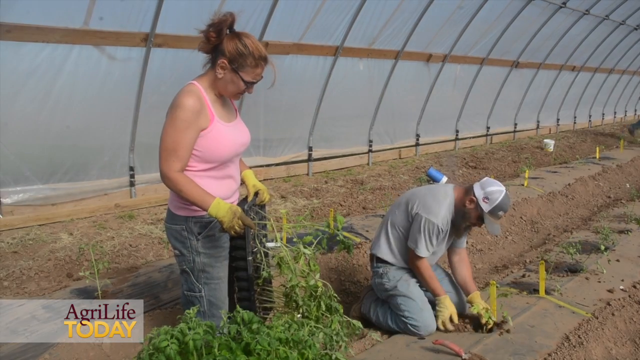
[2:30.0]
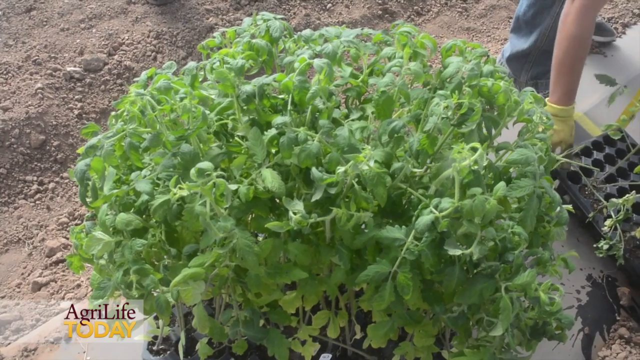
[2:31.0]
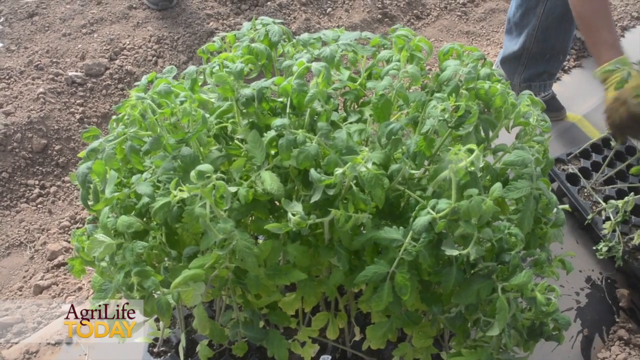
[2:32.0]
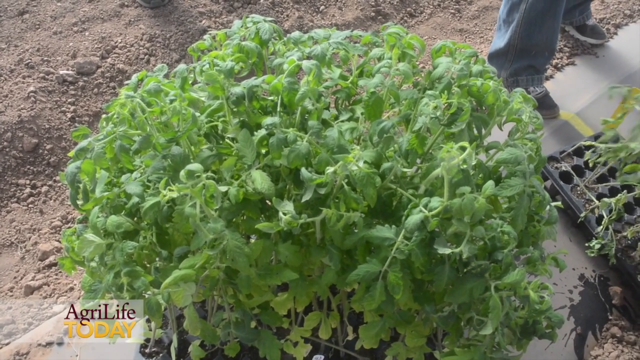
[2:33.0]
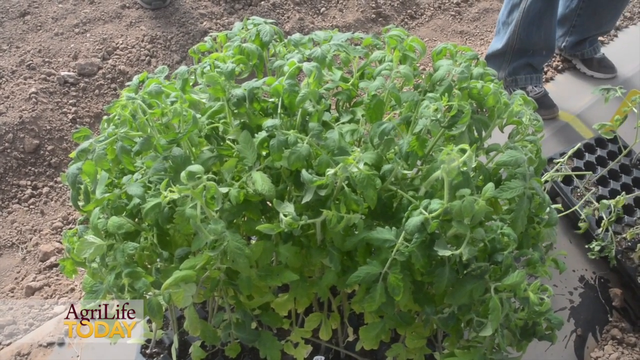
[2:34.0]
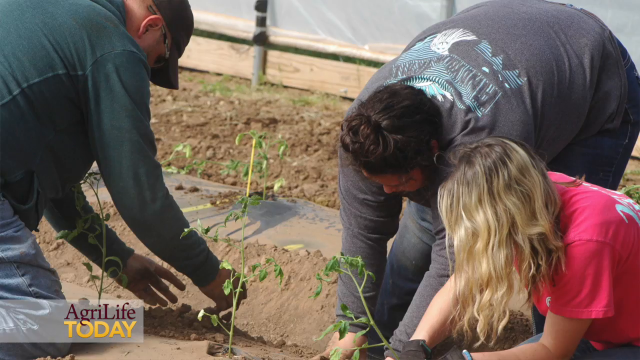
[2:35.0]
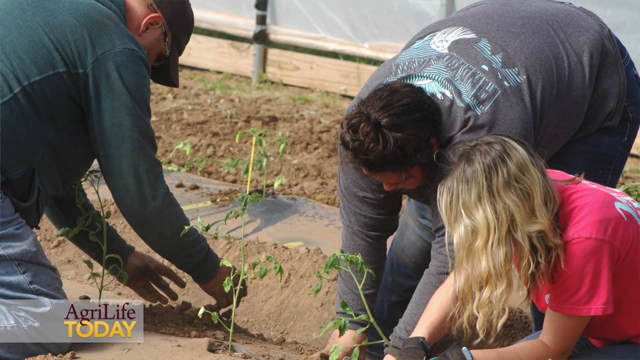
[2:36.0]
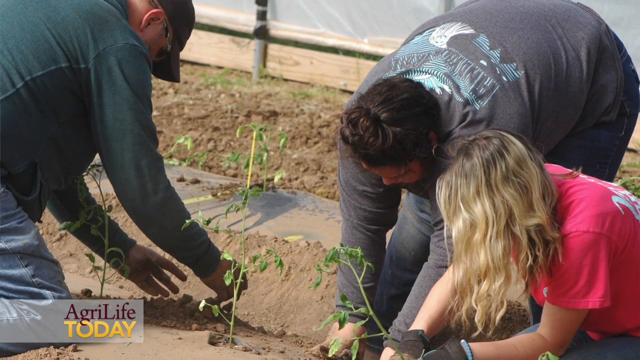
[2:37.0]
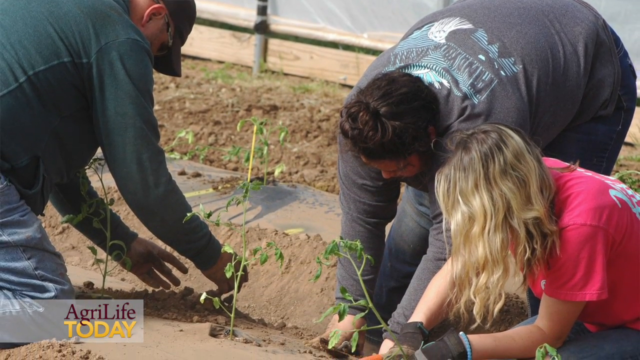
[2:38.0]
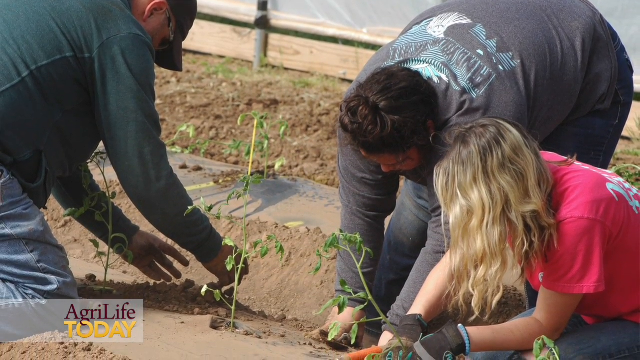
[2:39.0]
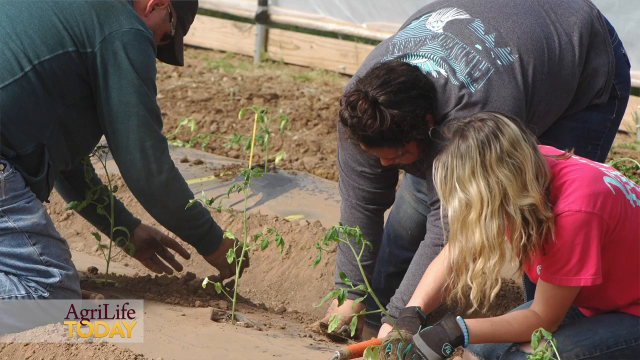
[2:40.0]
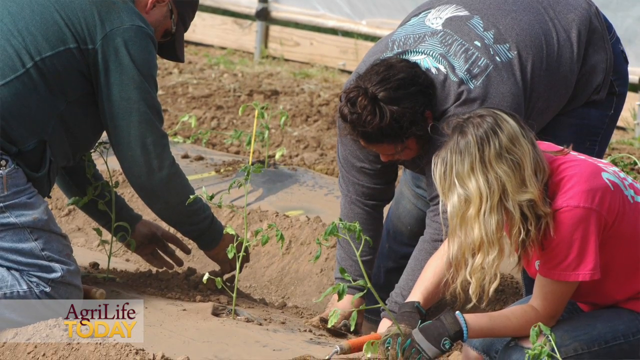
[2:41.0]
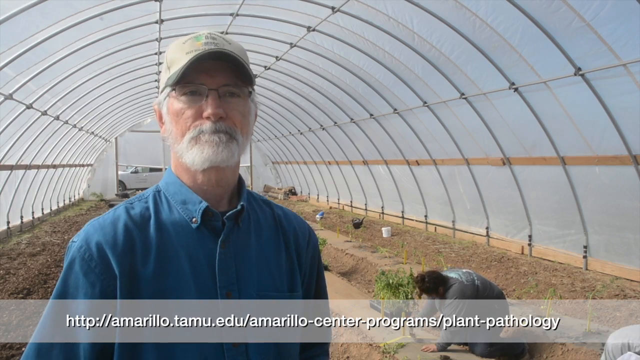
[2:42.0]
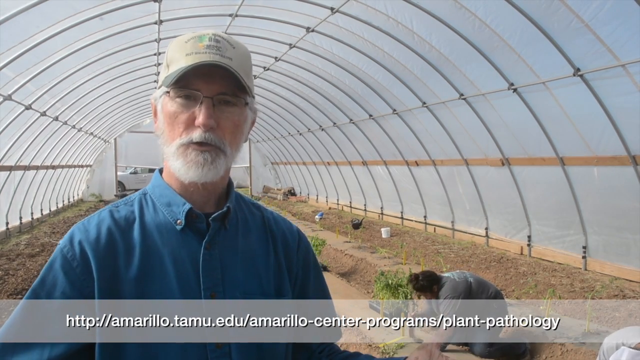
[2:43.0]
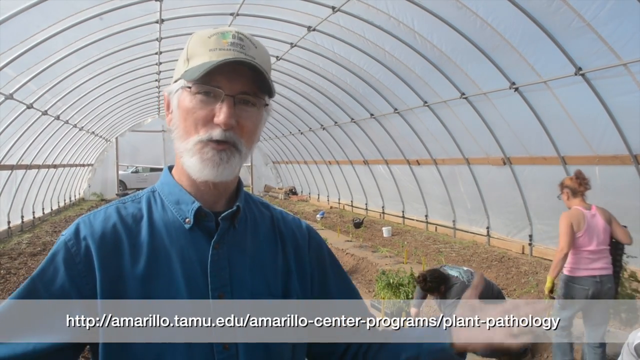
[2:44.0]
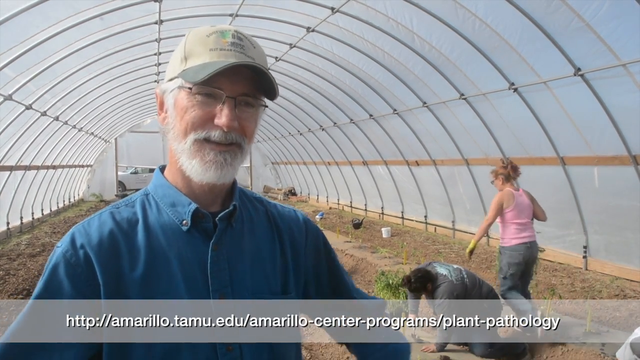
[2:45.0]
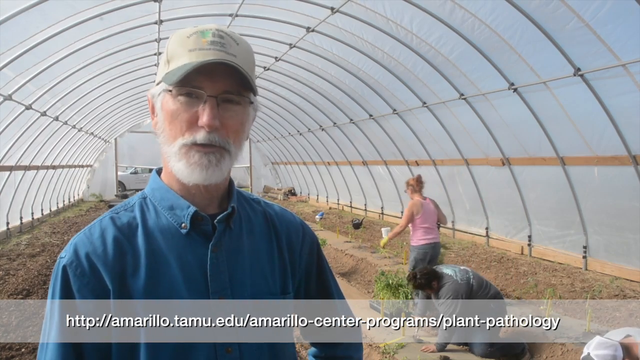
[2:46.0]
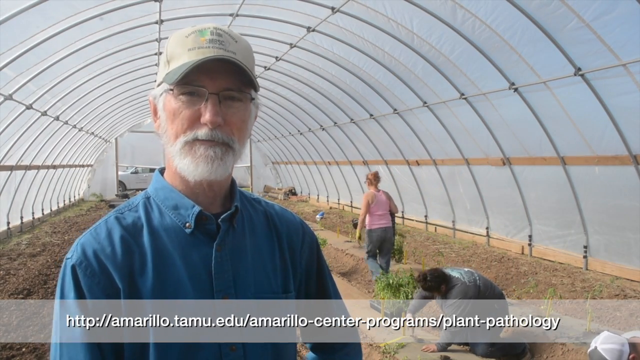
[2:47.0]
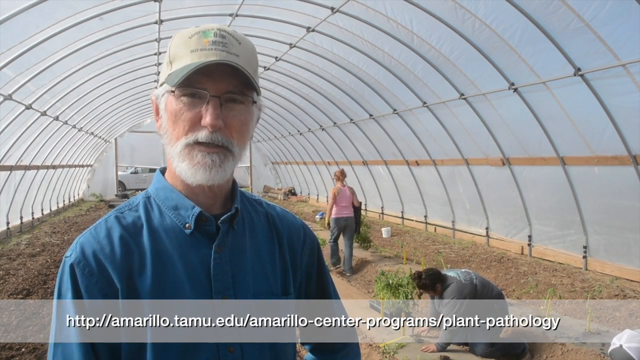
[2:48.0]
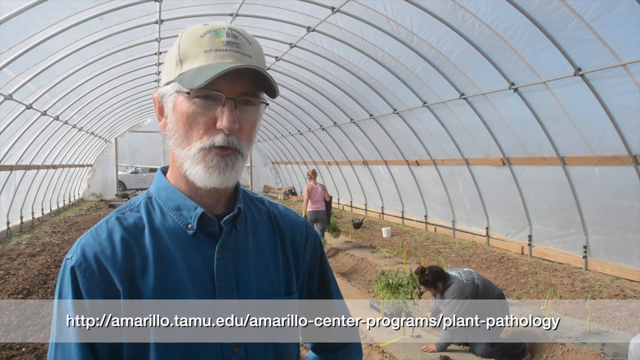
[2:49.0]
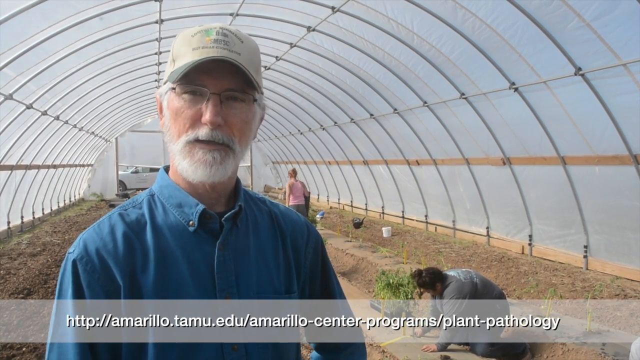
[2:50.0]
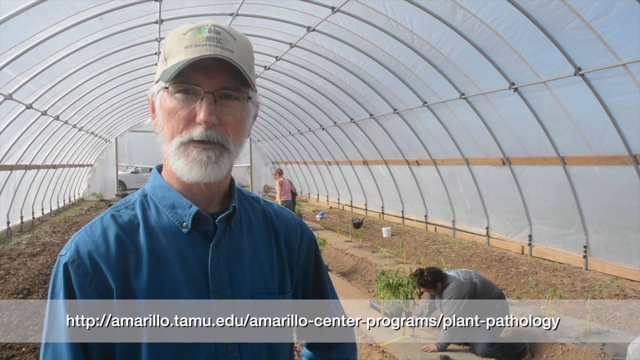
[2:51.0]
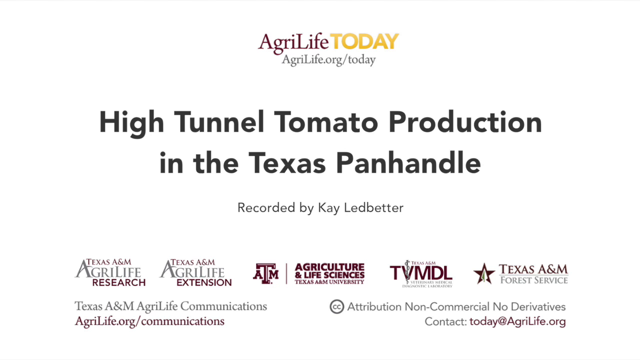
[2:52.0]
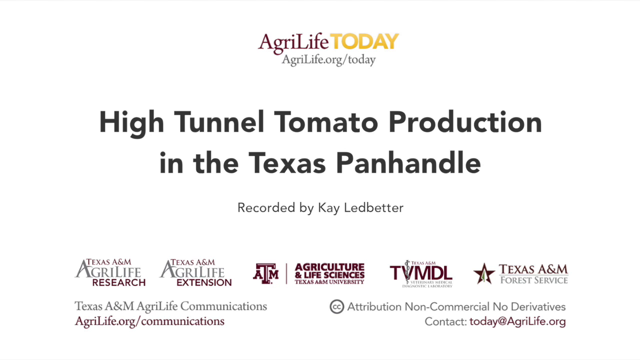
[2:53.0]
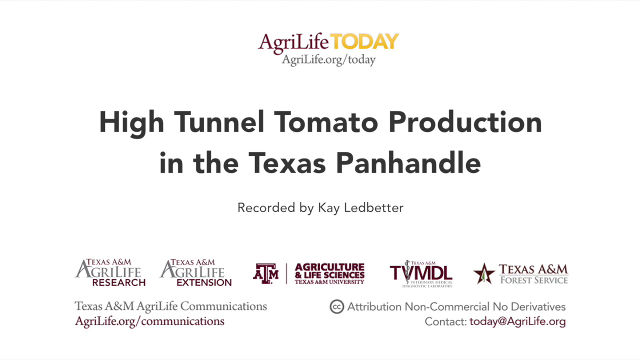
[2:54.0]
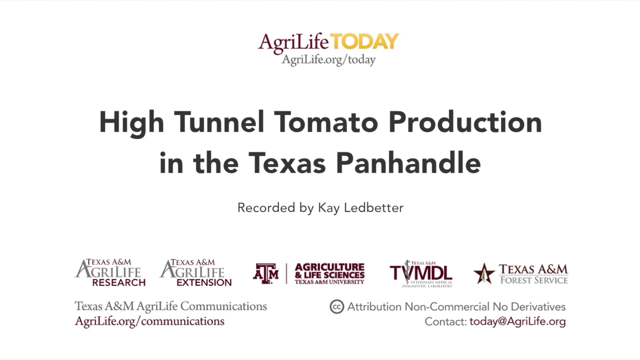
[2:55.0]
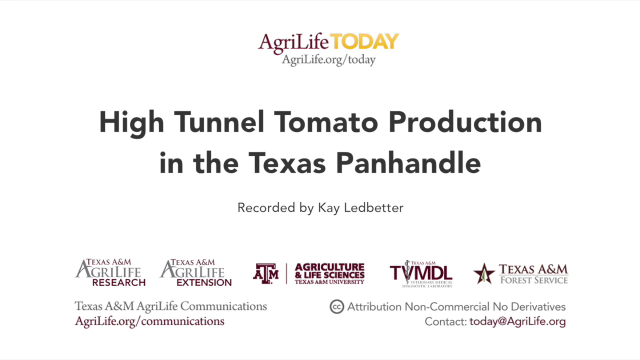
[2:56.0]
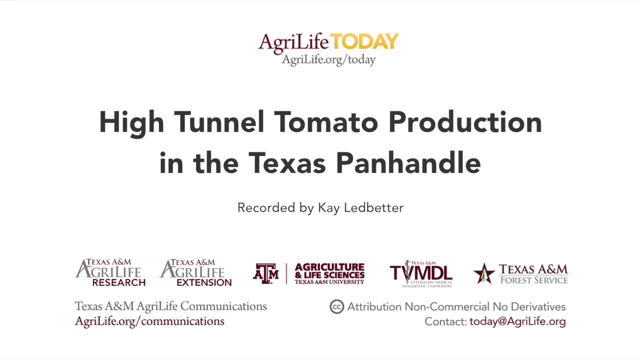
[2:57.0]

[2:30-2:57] A woman in a pink vest and blue jeans appears to be planting tomato plants. The video switches to a large plant, with somebody to the right of it pulling little baby plants out of little pots and appearing to plant them in the soil. A smiling older man with white hair, a white beard and glasses, wearing a long-sleeved blue shirt unbuttoned at the top, then talks to the camera. He stands to the left of the frame and is perhaps explaining what is going on behind him. Behind him, two women appear to be planting tomato plants; one of them, in a pink vest and jeans, carries a plant to the end of the shot. Finally, the words "high tunnel tomato production in the Texas panhandle" appear, with "AgriLife Today" written at the top of the screen.